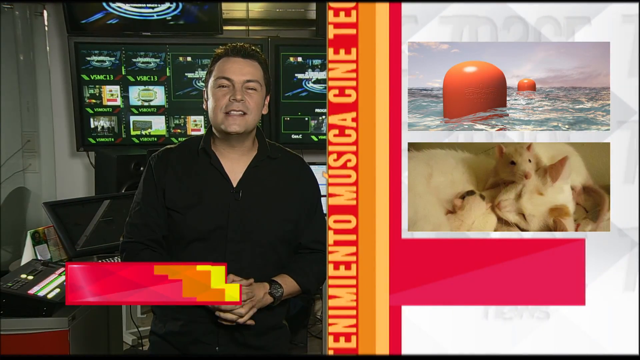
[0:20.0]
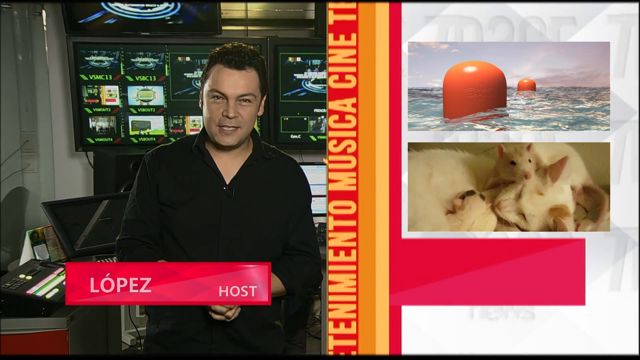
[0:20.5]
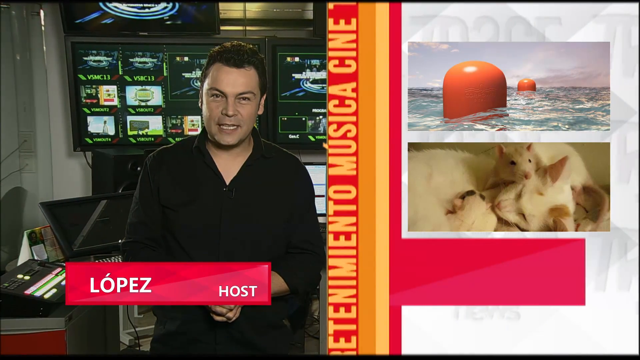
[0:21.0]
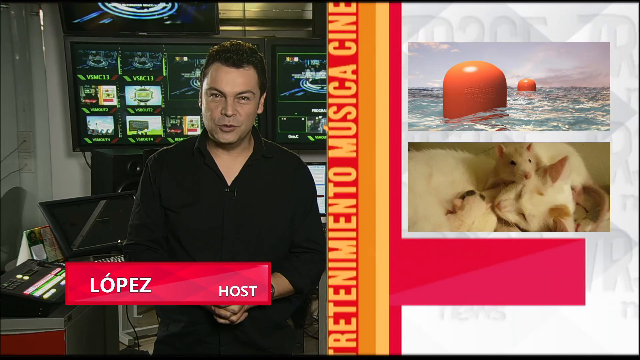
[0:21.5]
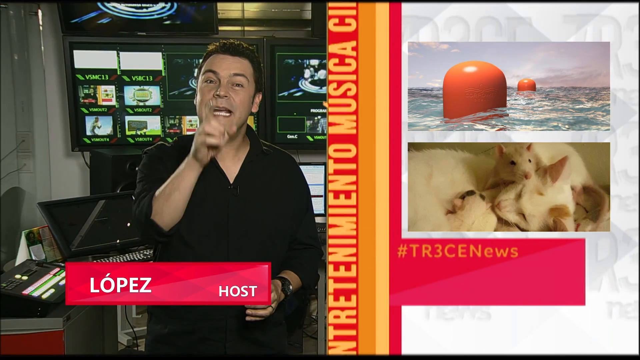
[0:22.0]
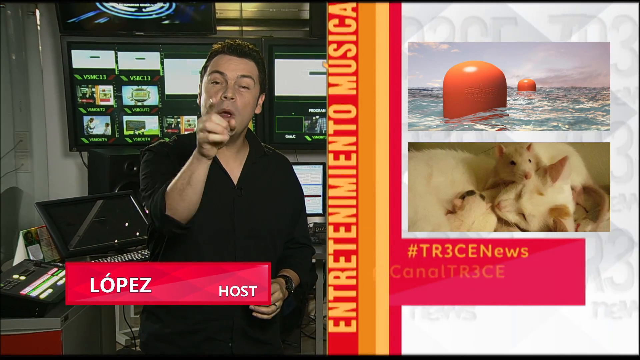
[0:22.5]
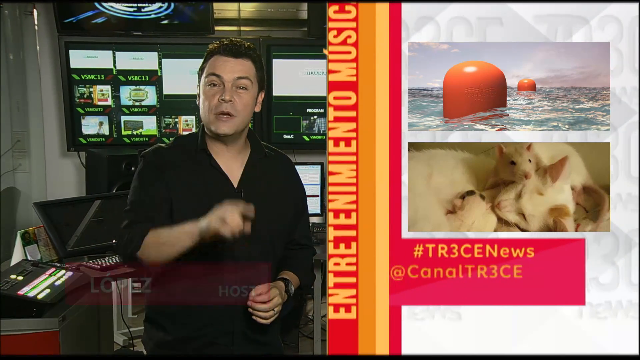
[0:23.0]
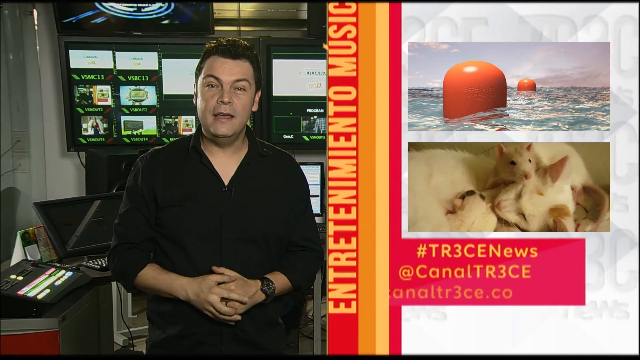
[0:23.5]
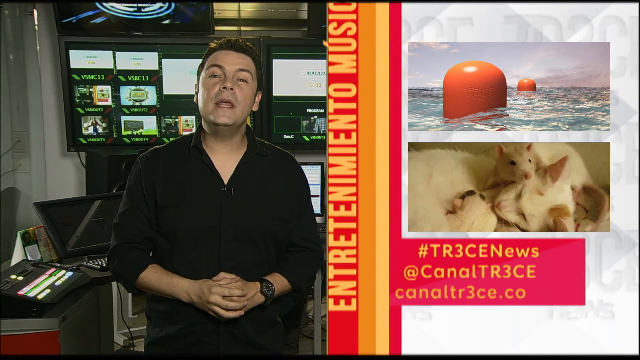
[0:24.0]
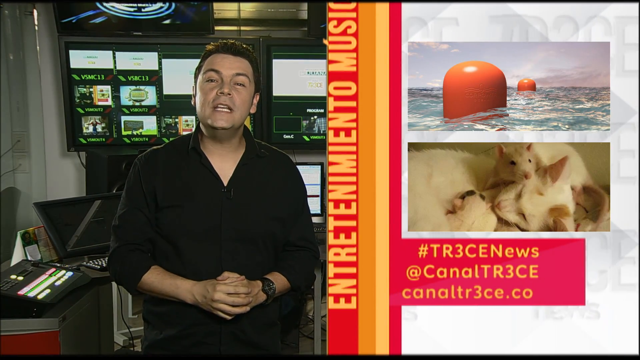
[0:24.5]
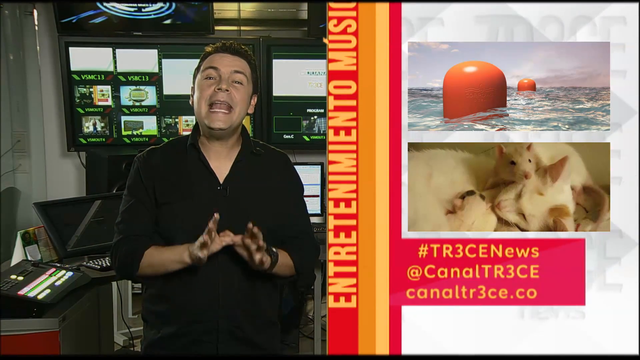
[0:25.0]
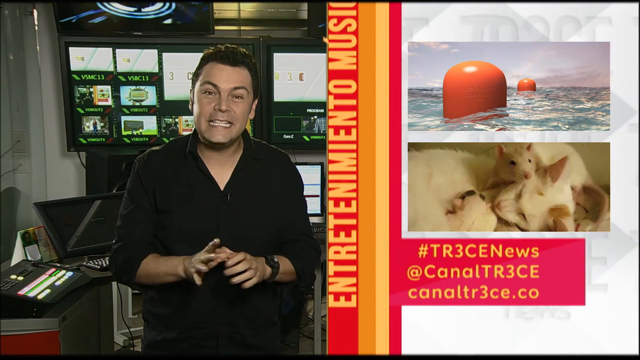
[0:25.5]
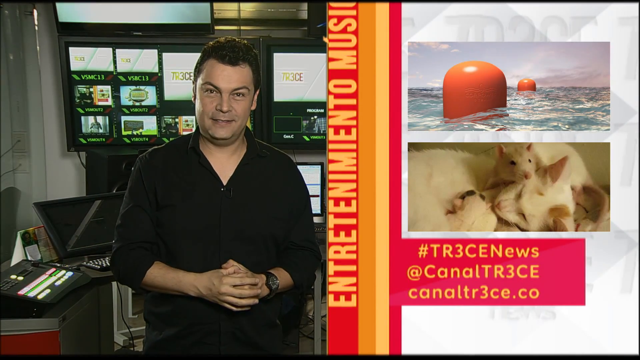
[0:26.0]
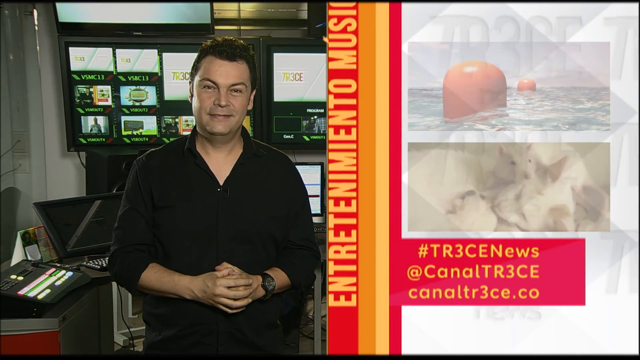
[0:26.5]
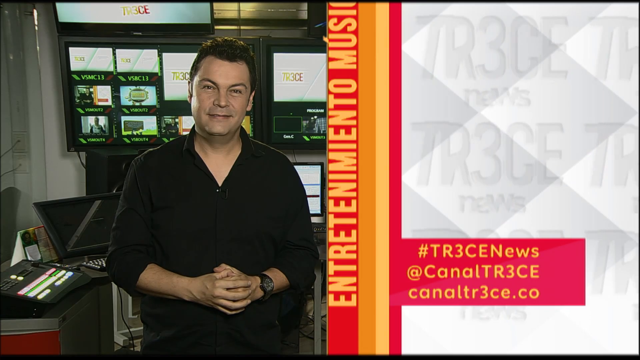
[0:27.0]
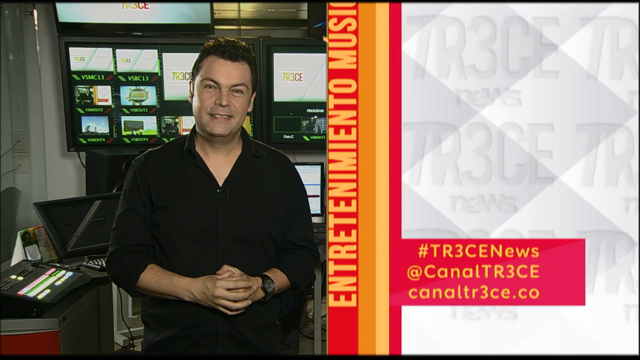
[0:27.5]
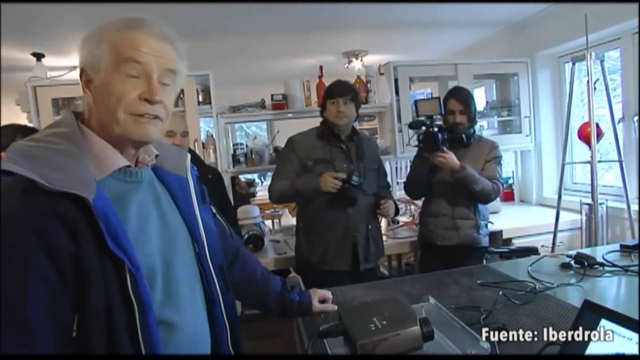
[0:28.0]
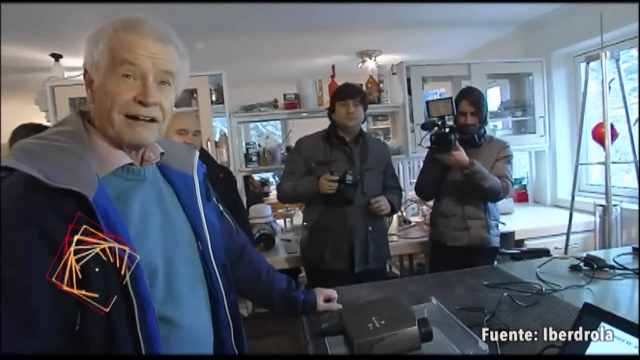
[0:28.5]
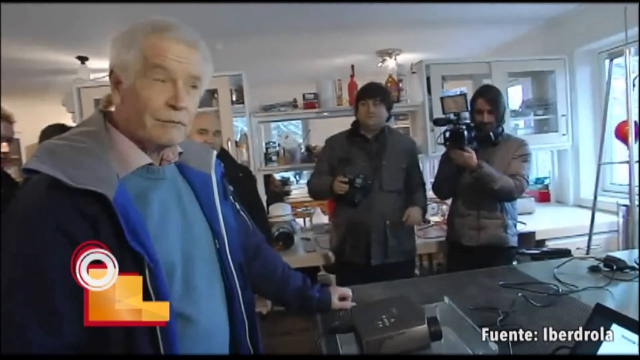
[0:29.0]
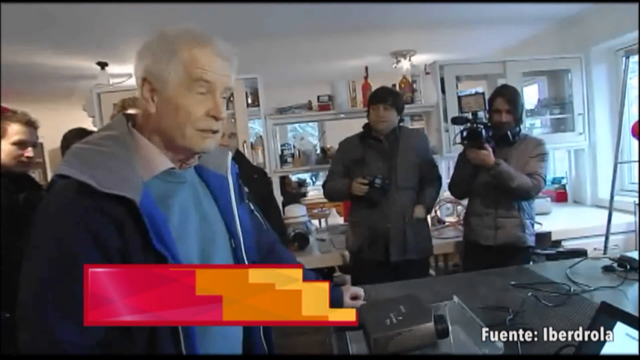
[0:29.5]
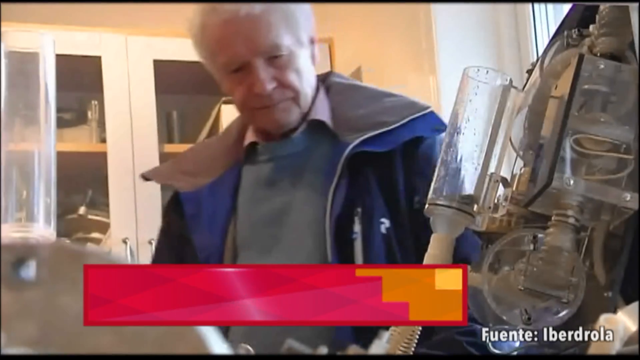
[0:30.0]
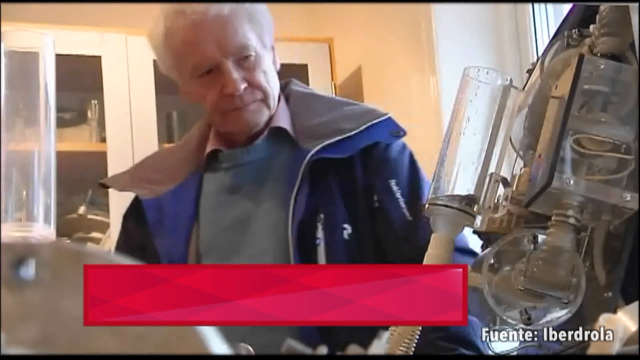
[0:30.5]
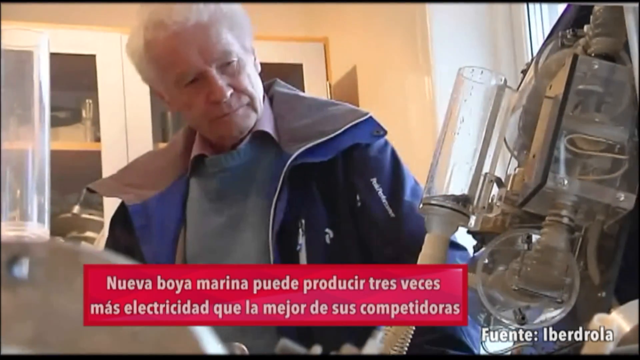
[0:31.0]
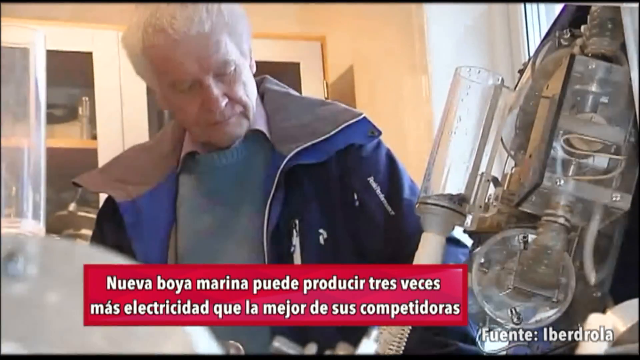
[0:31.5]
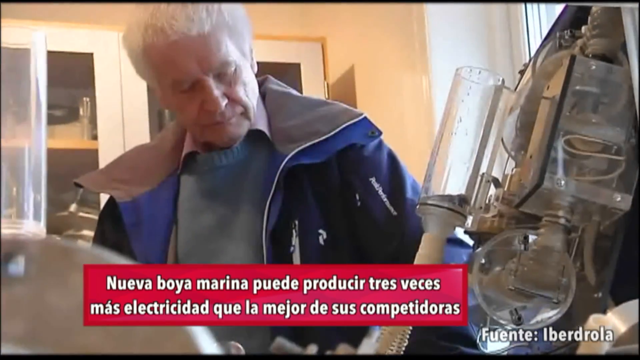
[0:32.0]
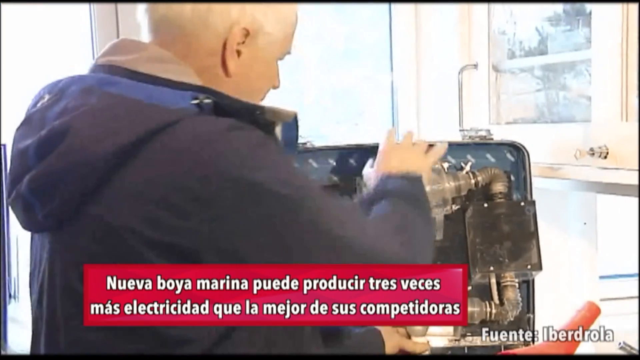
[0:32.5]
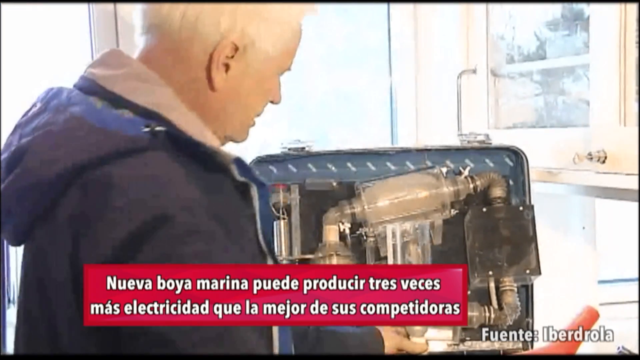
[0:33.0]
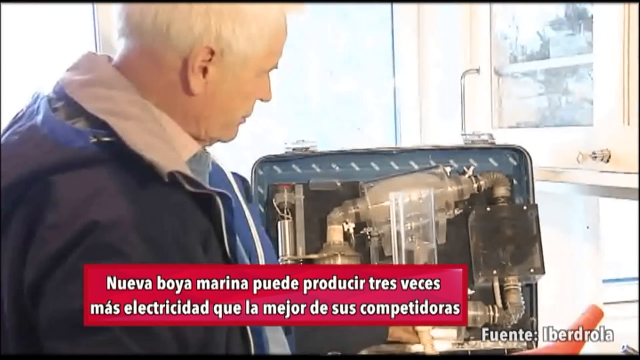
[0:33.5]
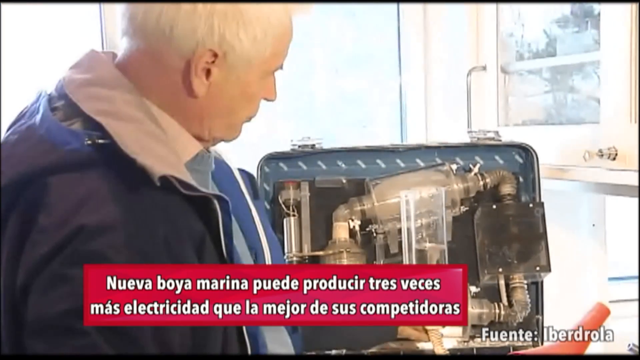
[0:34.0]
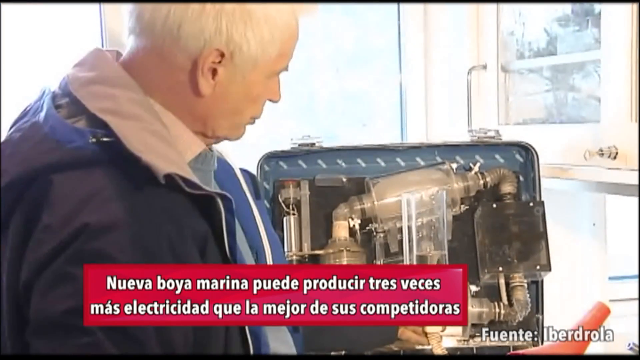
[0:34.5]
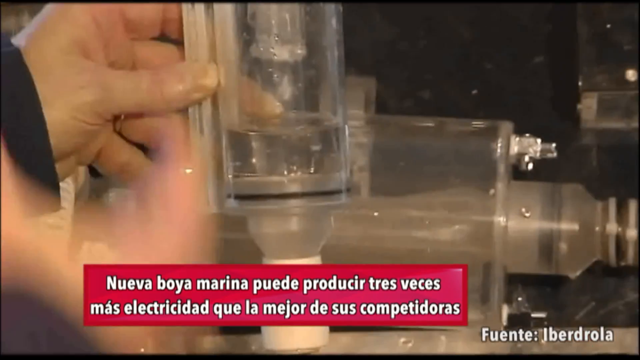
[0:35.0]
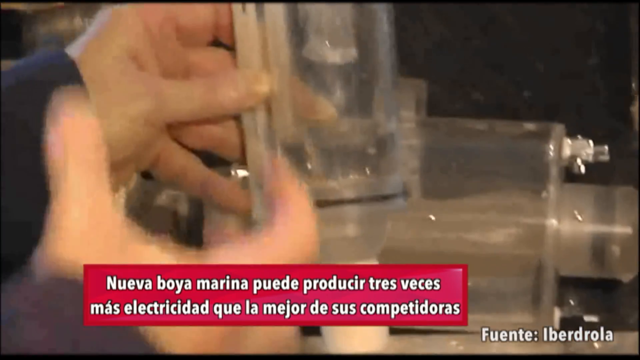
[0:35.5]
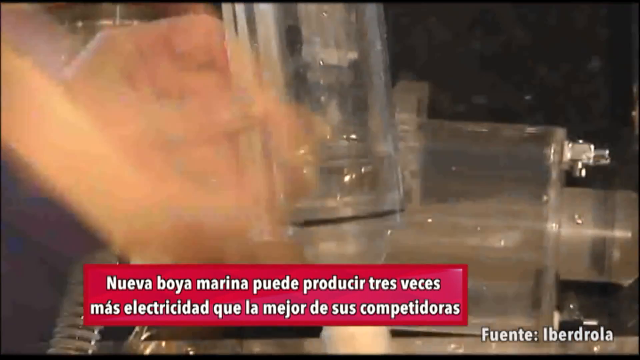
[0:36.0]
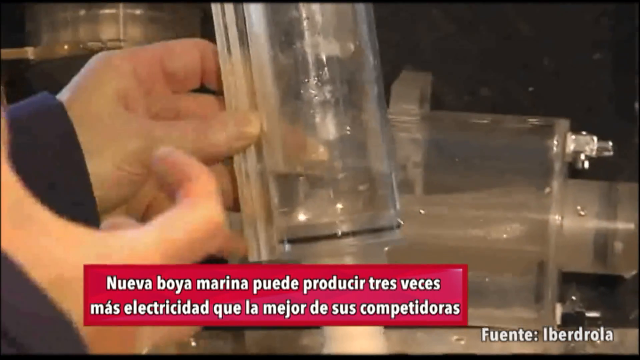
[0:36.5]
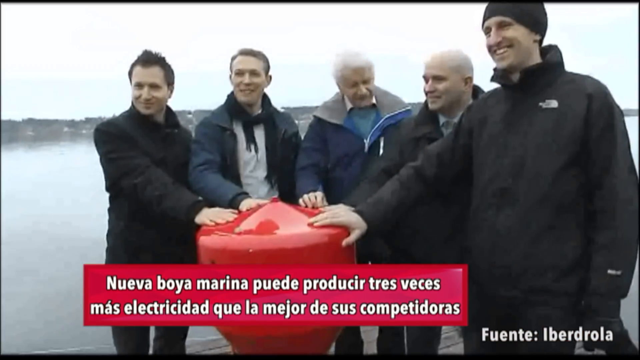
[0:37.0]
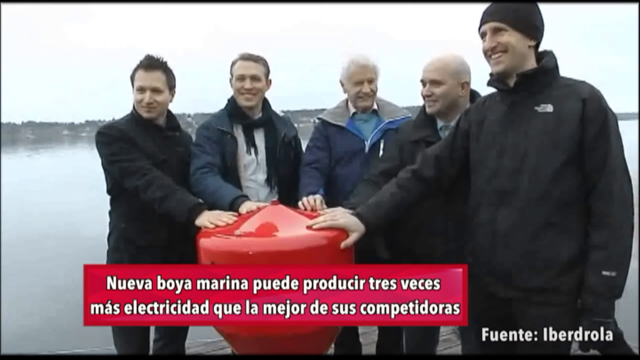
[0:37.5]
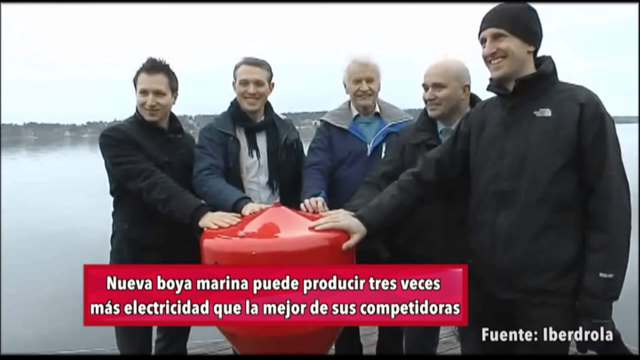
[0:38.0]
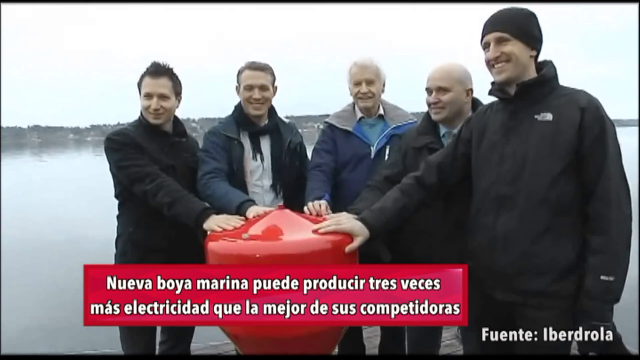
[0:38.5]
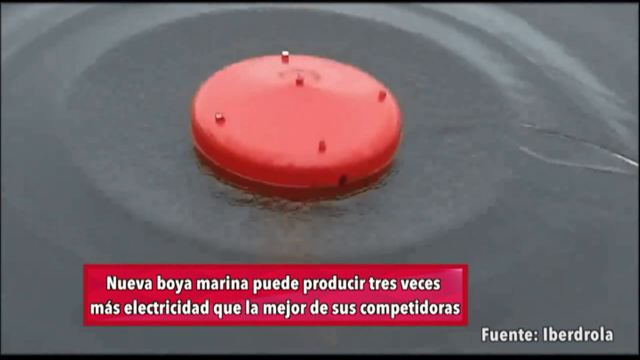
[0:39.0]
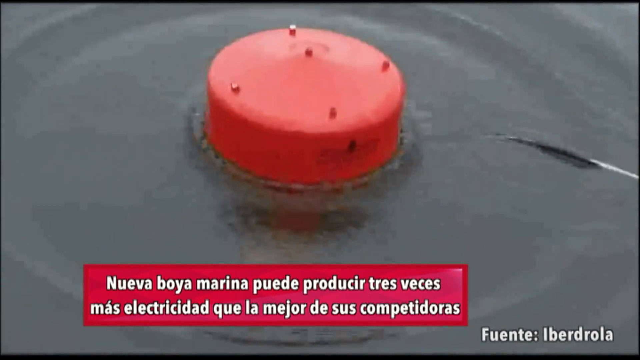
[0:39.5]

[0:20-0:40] Lopez, the host, is a reporter inside the TV channel, reporting on "#tr3cenews". On the left is the picture of Lopez, a white man with black hair wearing a black t-shirt with folded sleeves, his hands folded and a watch on his left hand, pointing to the camera. In the background are many screens playing different videos, some green and others white, on black backgrounds, and cables run through the channel's studio. As the video plays, the videos on the background screens change. The man holds his hand above his waist and continues explaining with many gestures. On the right side, a cat and a rat are shown.